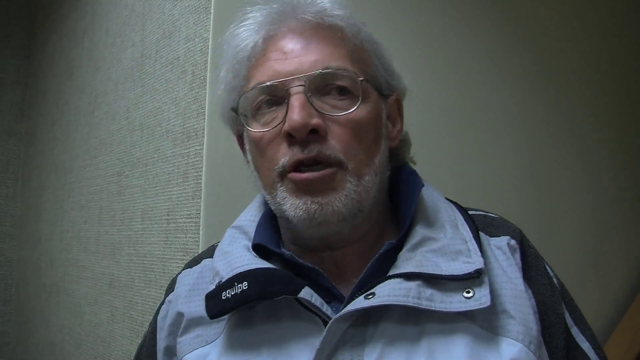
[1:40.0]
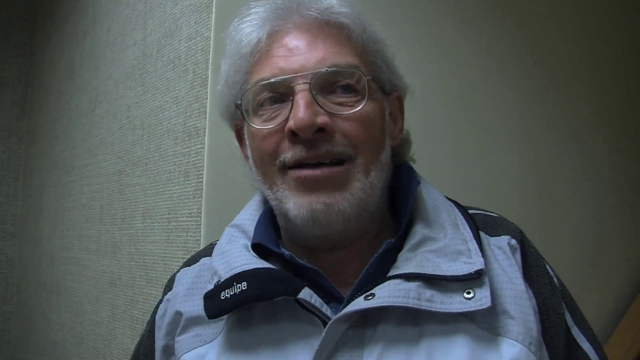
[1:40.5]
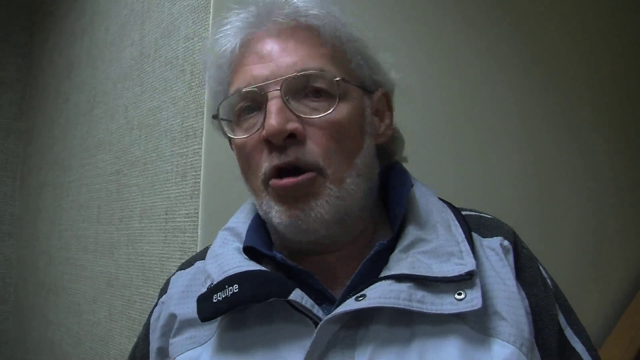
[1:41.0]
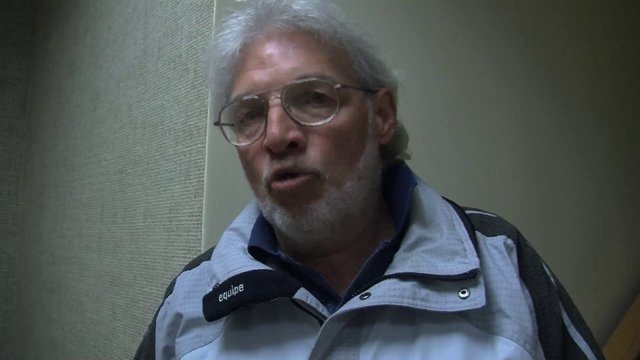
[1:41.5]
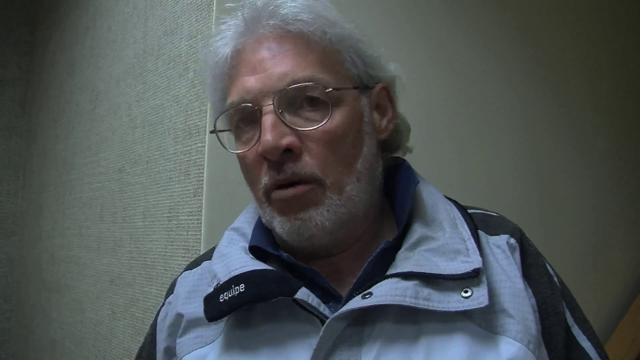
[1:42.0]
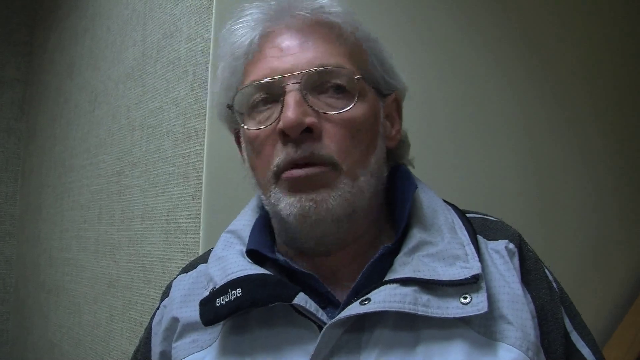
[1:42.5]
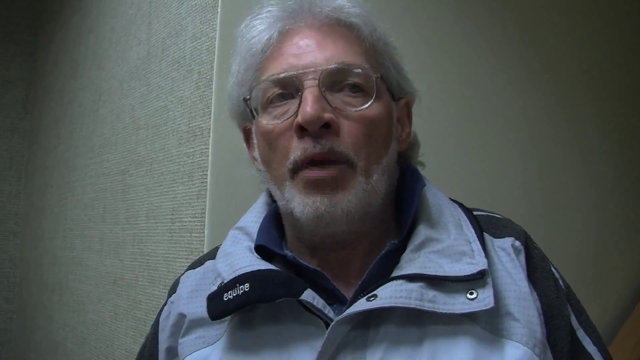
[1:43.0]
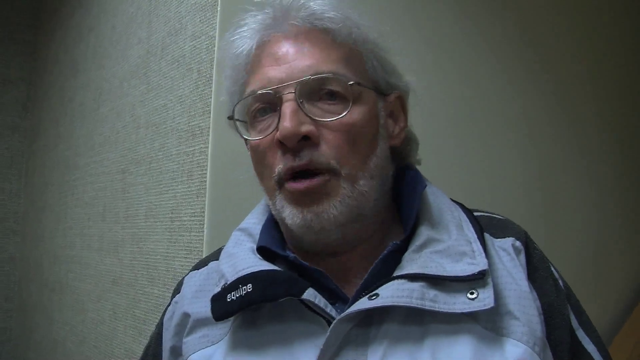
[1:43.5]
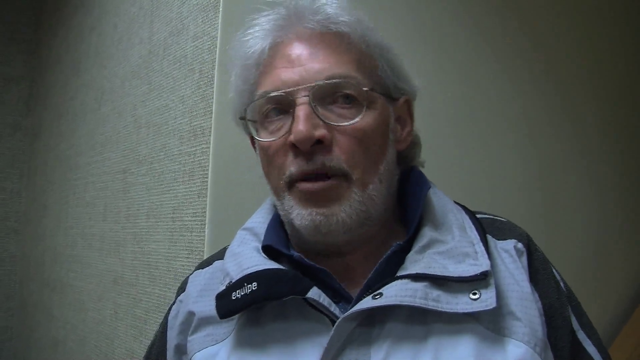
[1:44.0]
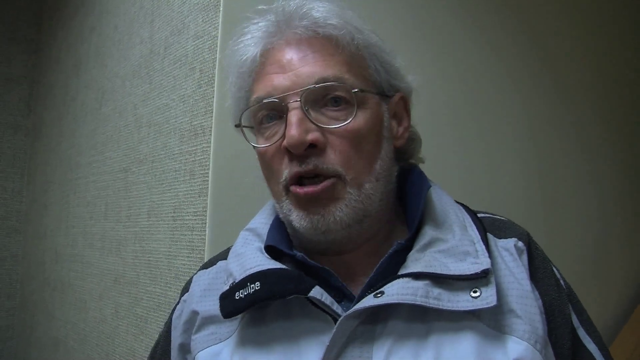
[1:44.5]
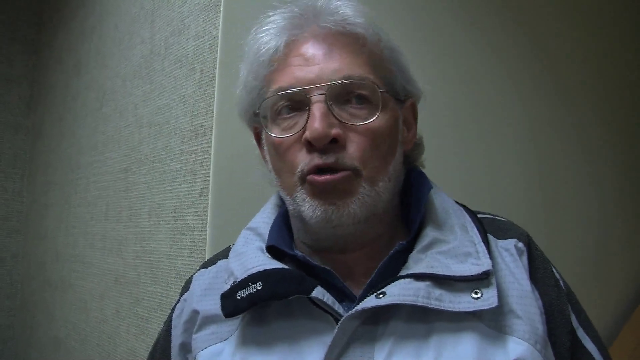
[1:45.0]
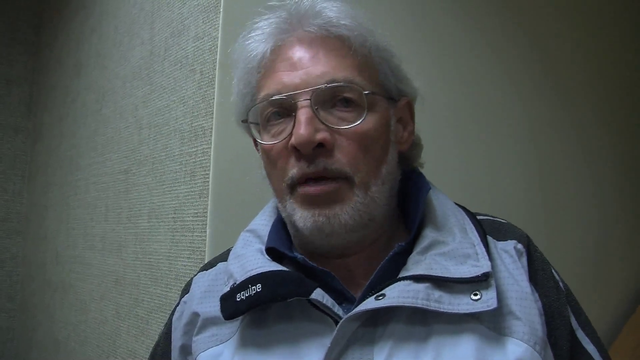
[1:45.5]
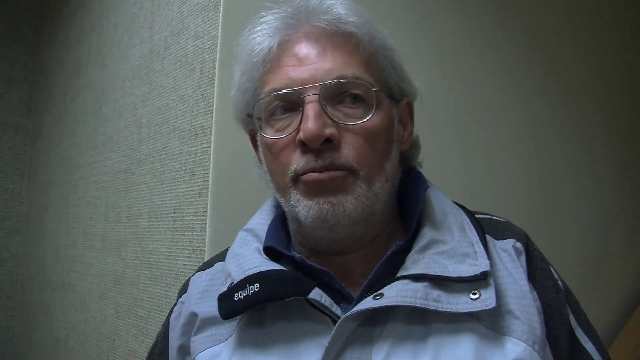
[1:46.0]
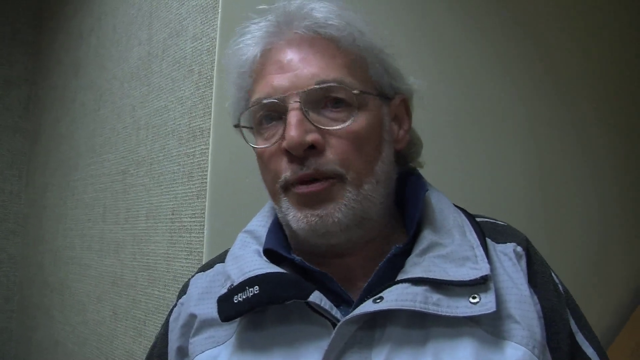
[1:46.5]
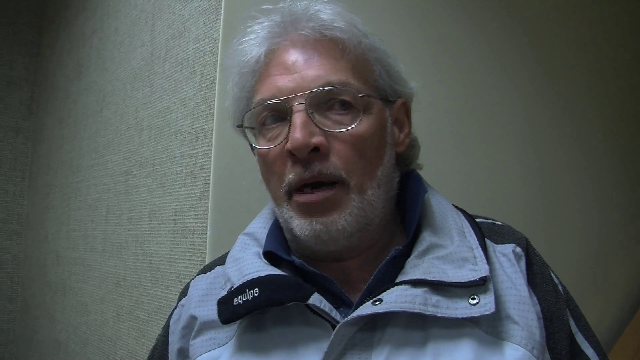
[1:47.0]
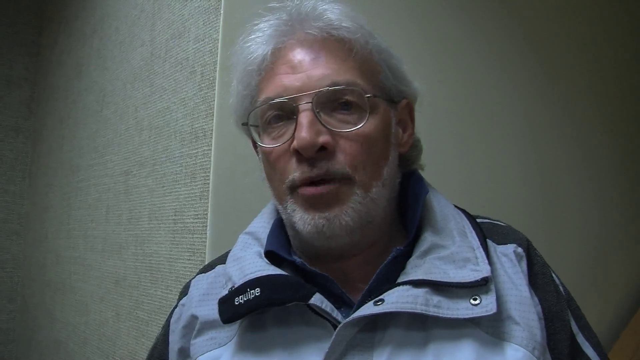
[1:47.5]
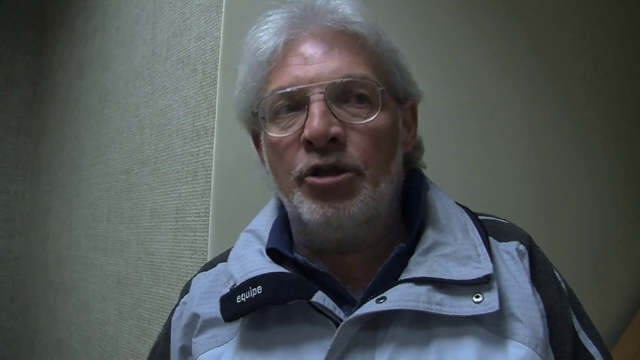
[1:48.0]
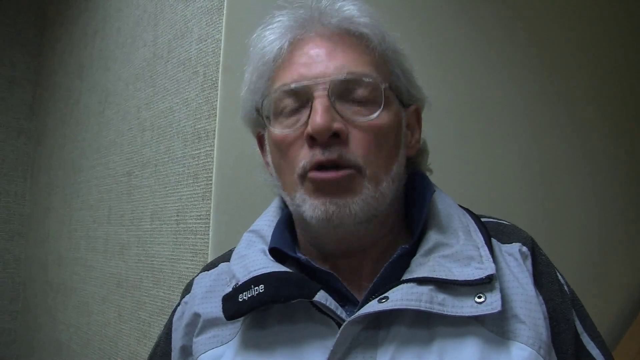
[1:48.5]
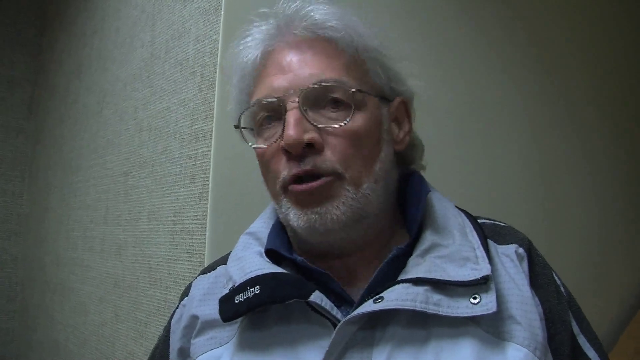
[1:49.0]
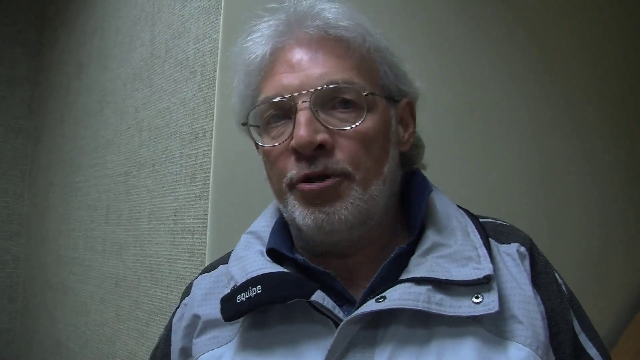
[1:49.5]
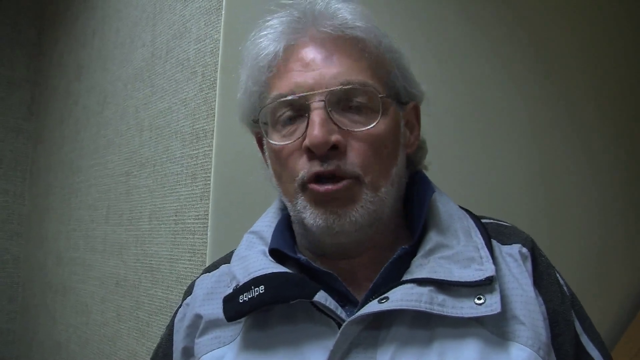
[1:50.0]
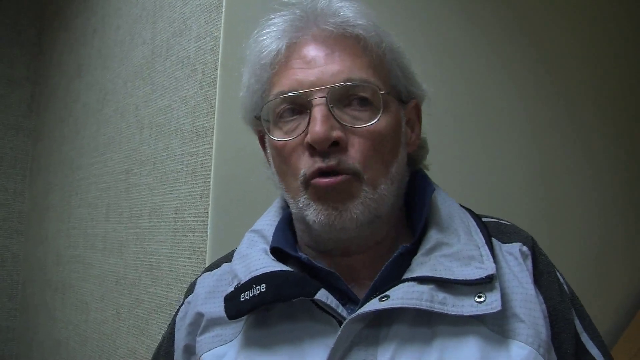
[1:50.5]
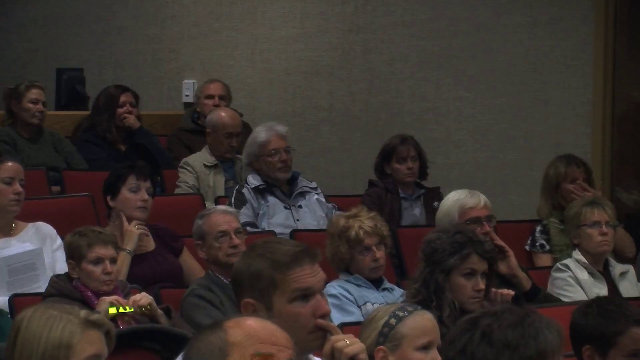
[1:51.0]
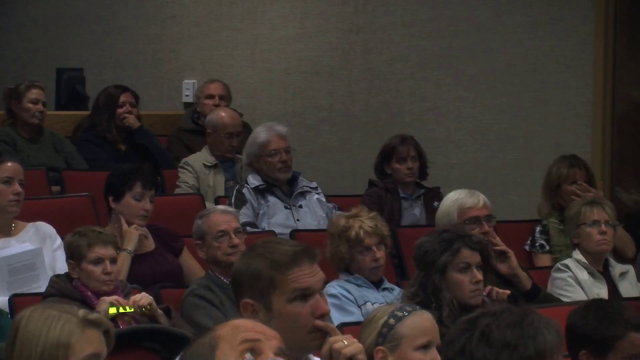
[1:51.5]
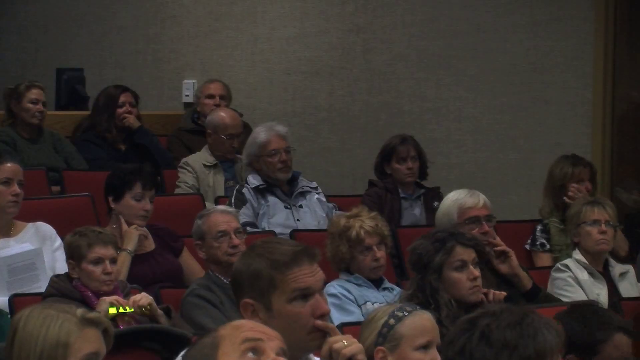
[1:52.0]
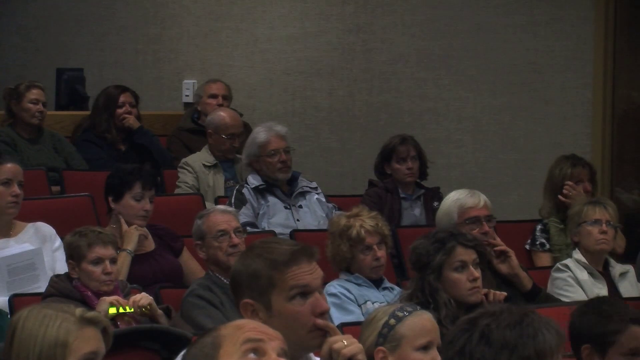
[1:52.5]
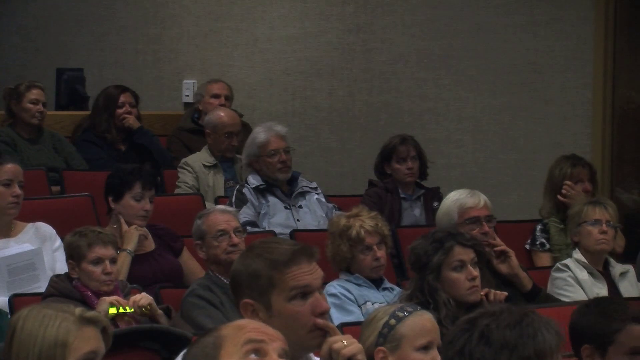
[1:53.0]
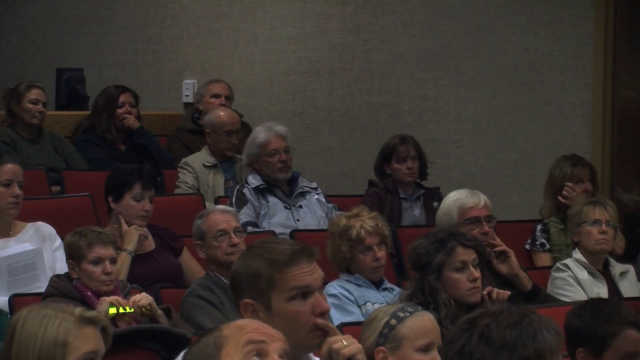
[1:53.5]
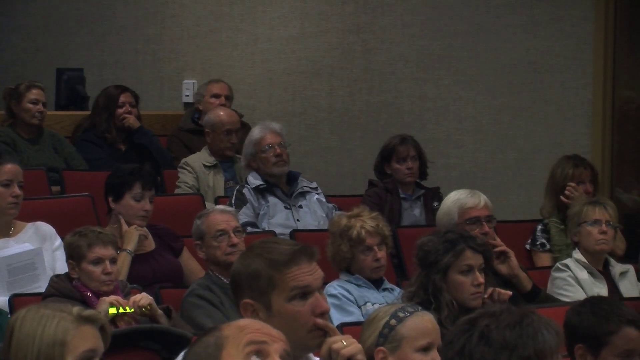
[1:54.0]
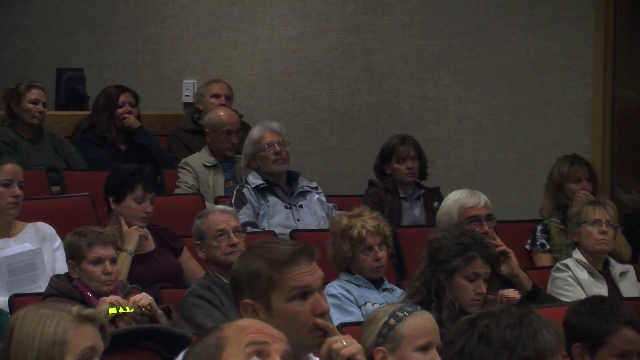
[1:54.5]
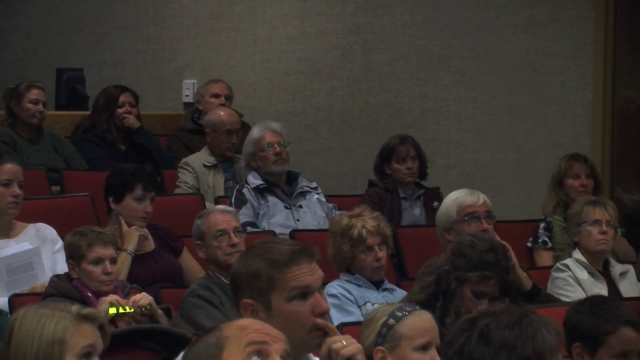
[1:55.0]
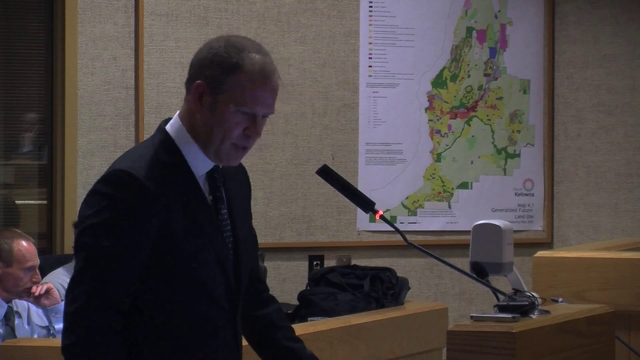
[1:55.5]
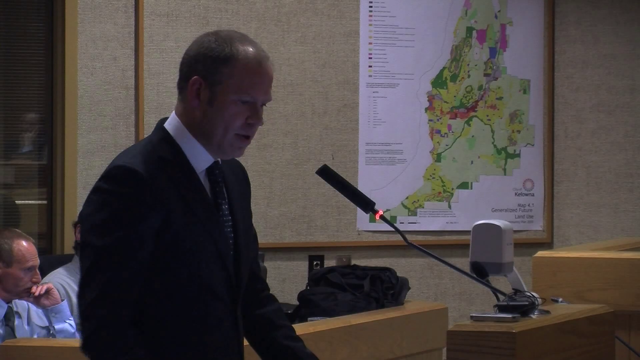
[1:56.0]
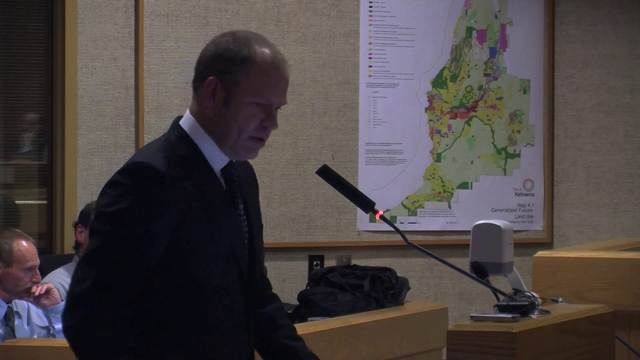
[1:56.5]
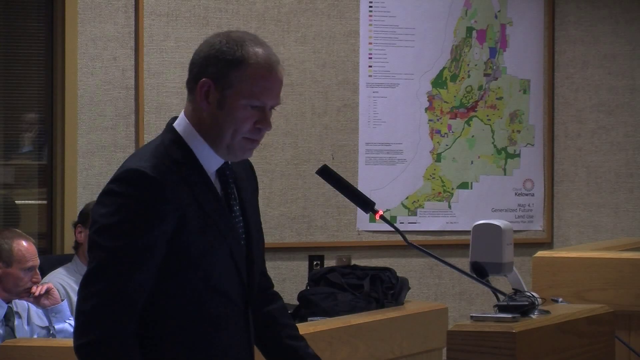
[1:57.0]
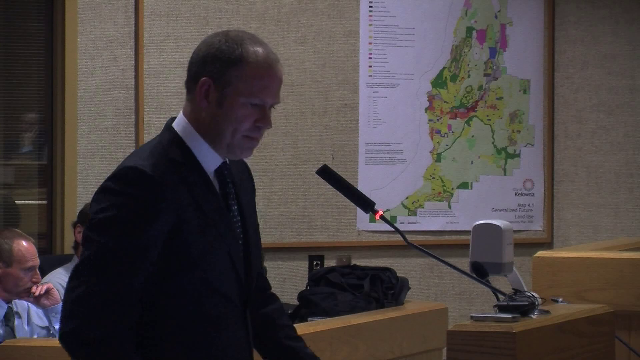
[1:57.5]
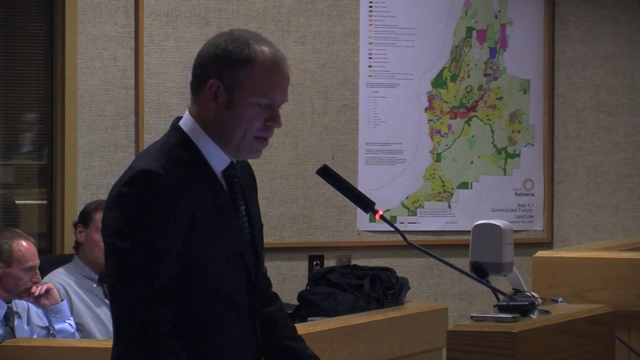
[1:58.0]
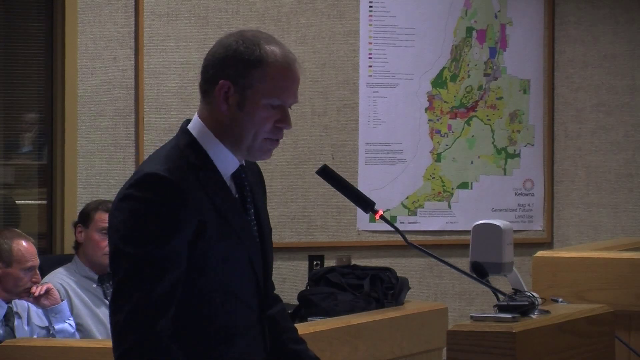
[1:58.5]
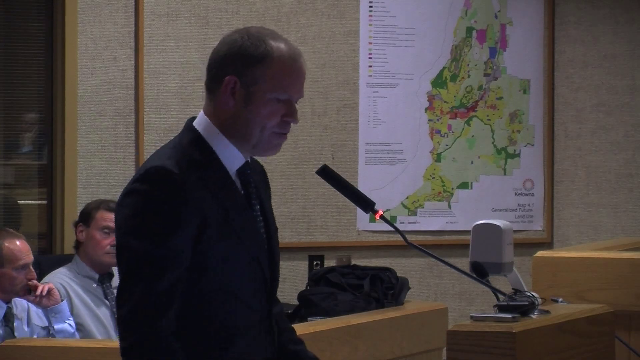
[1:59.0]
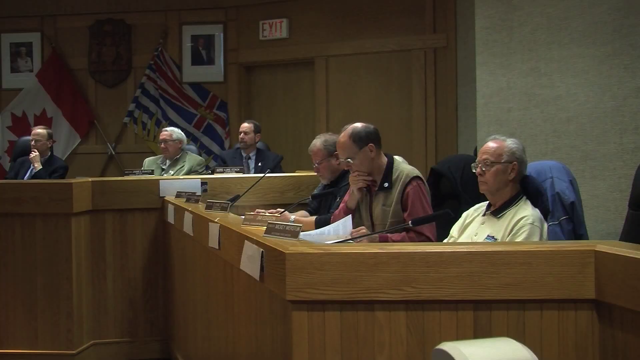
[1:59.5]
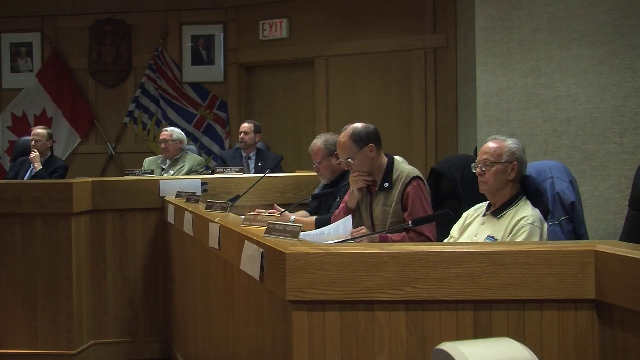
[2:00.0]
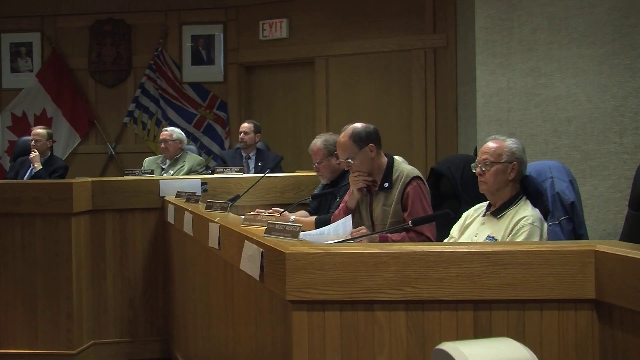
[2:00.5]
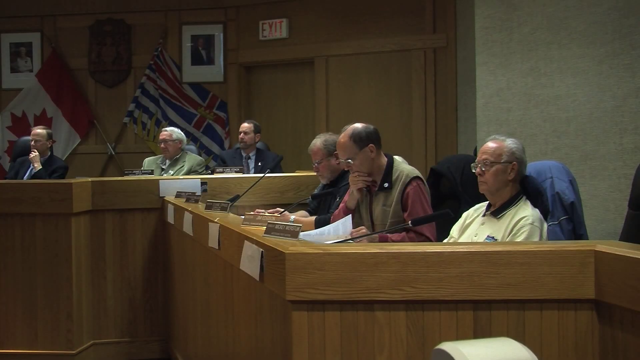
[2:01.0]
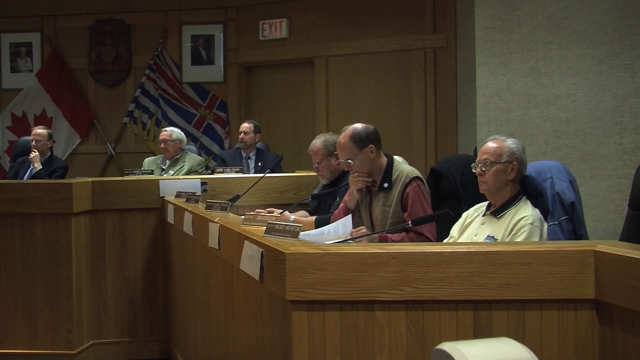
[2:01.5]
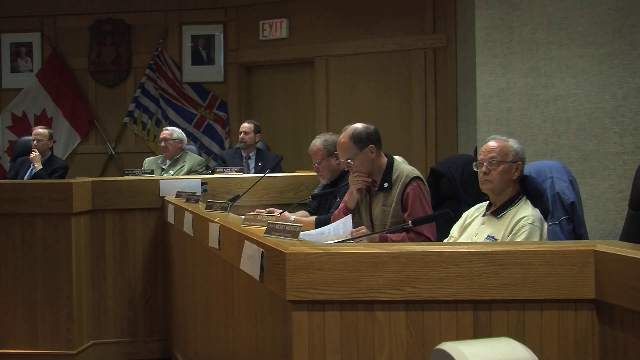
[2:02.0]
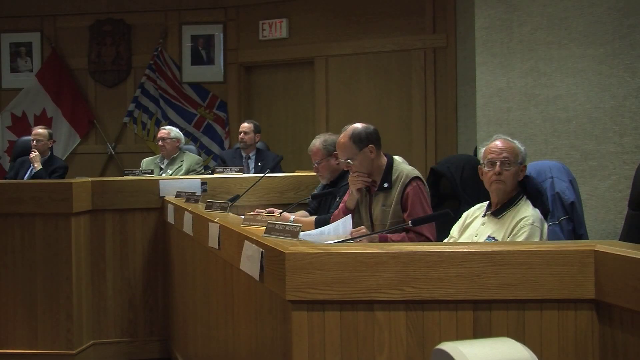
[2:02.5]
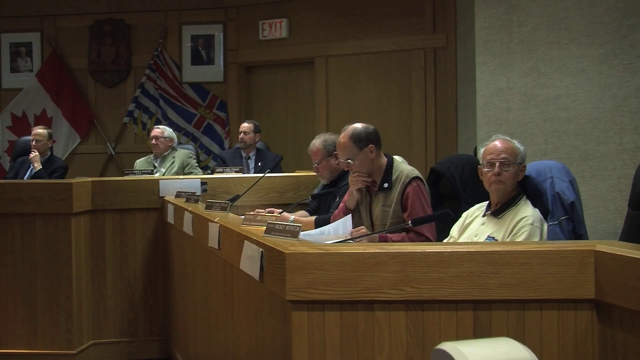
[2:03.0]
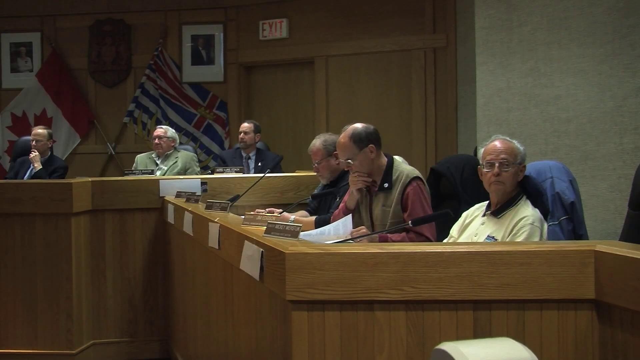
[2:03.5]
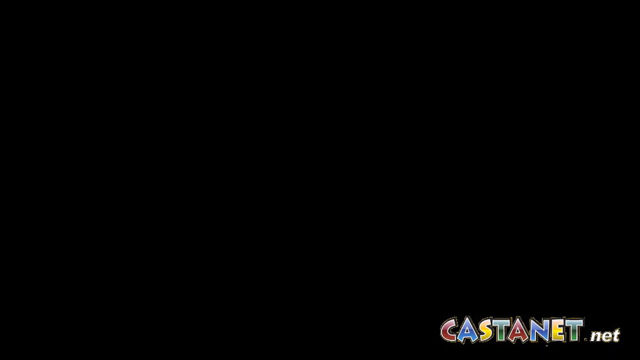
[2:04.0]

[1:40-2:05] The owner of the dog incarcerated by RDCO gives a speech. A number of pictures show individuals with dog bites on their cheeks. The man looks very aggressive in the interview.